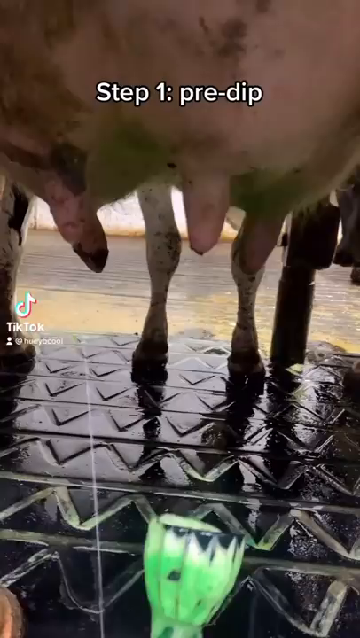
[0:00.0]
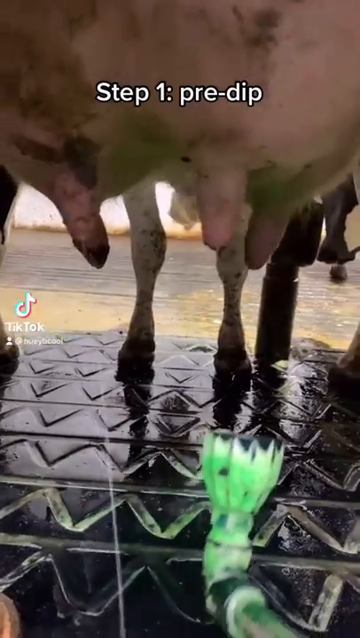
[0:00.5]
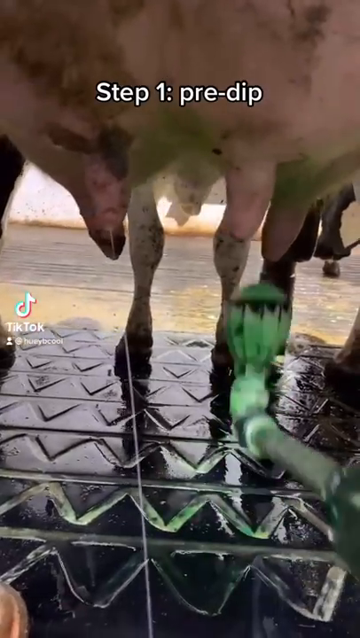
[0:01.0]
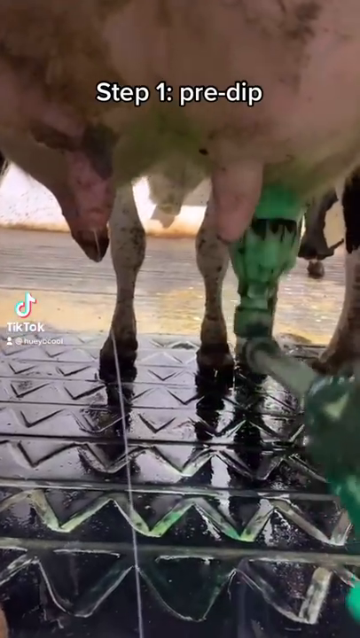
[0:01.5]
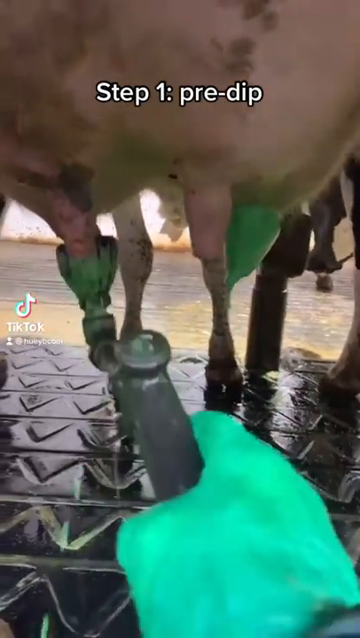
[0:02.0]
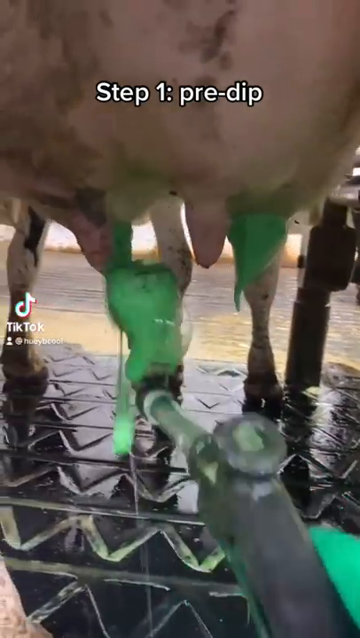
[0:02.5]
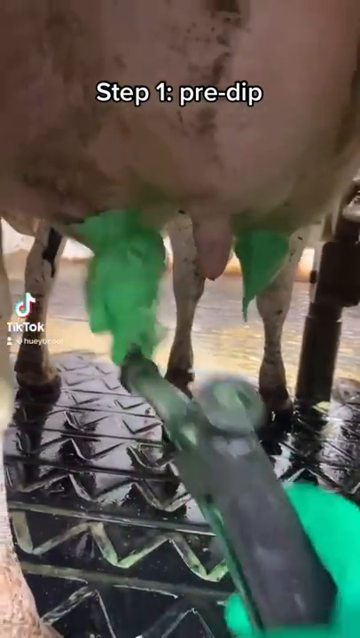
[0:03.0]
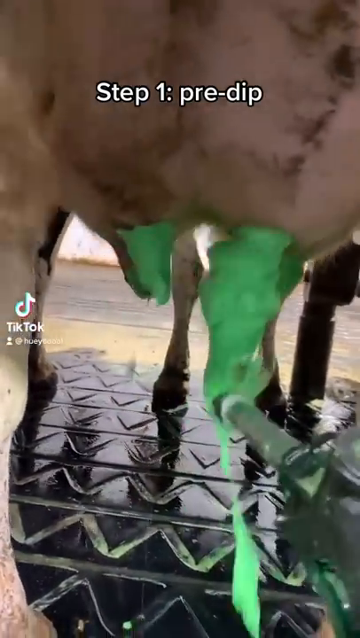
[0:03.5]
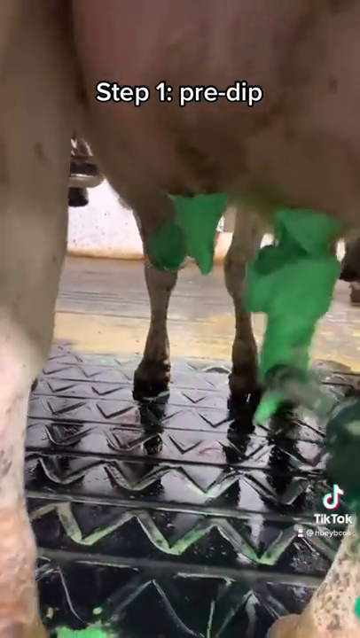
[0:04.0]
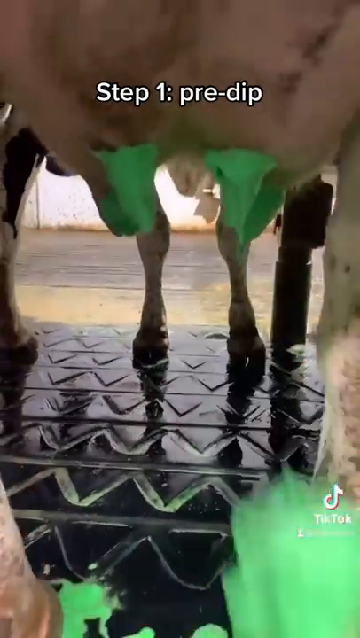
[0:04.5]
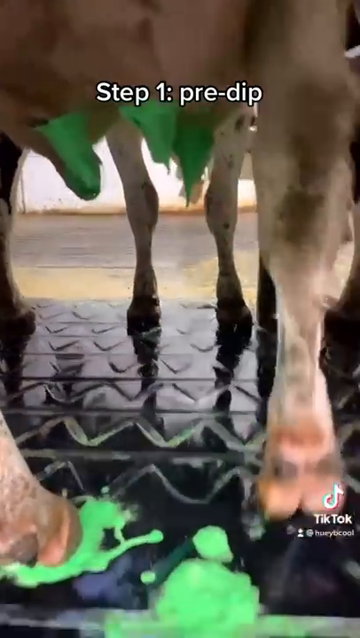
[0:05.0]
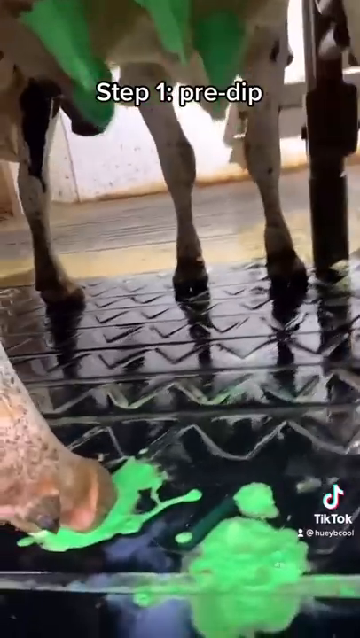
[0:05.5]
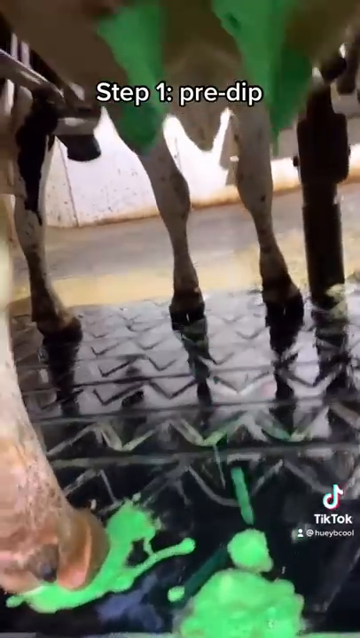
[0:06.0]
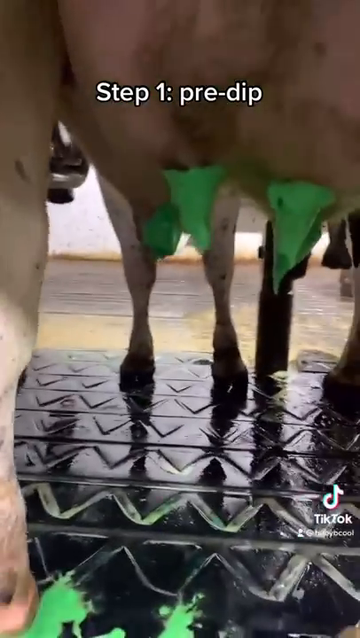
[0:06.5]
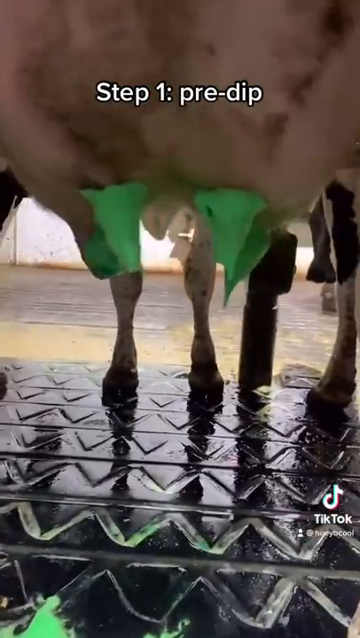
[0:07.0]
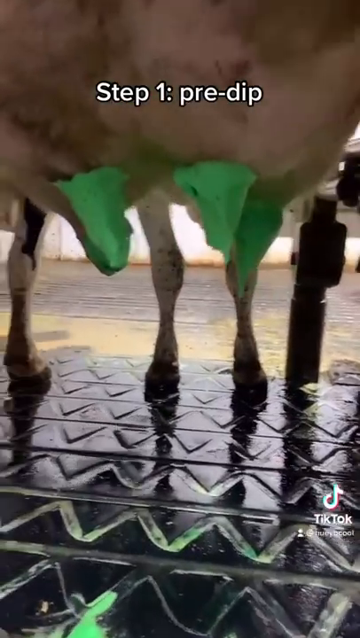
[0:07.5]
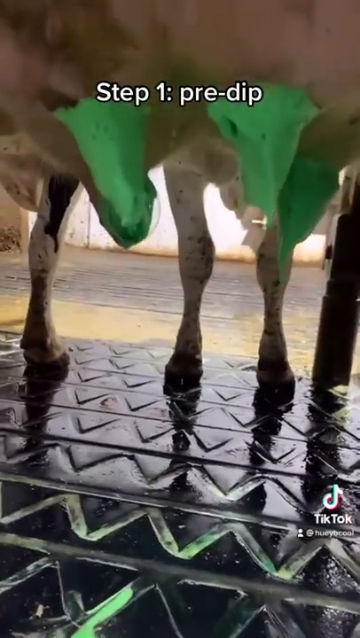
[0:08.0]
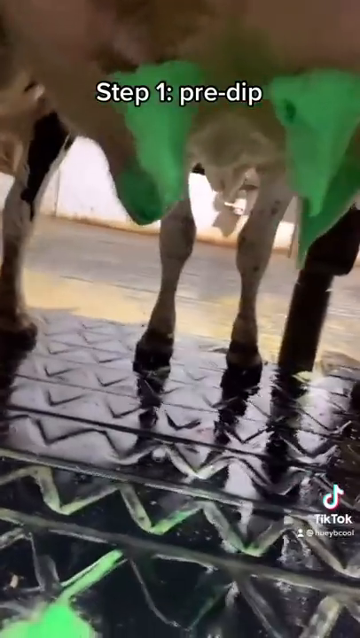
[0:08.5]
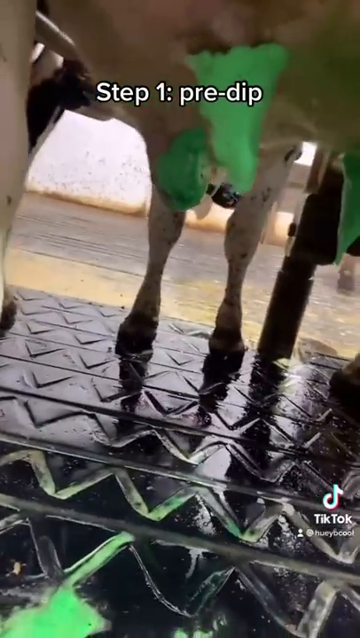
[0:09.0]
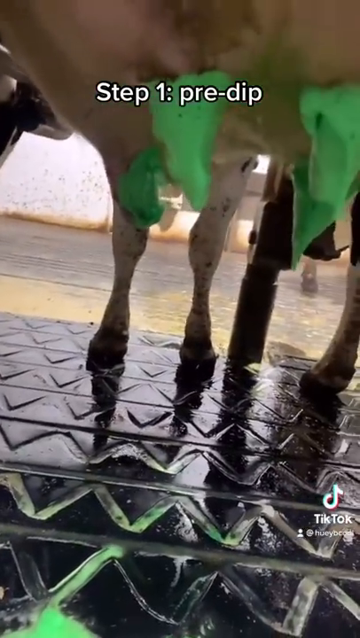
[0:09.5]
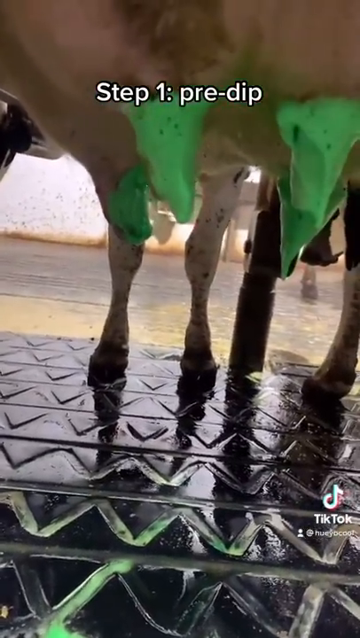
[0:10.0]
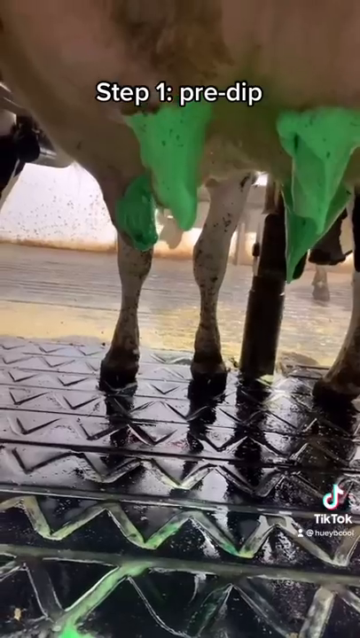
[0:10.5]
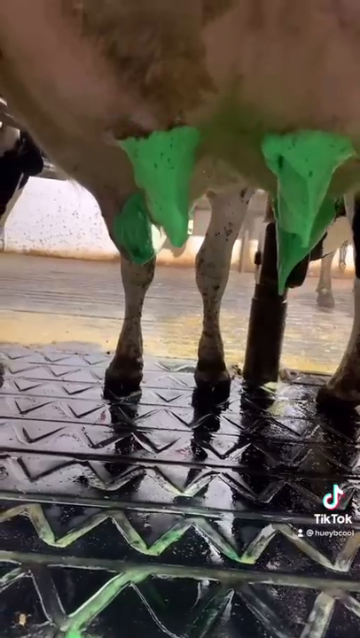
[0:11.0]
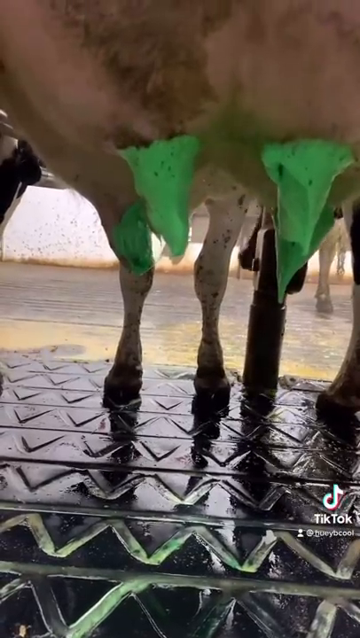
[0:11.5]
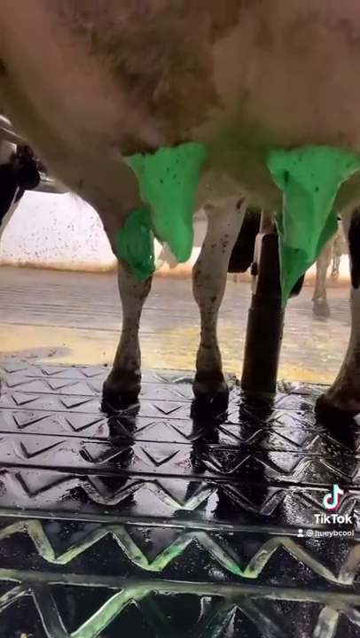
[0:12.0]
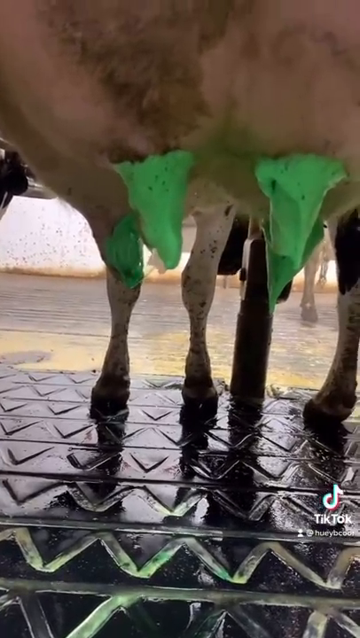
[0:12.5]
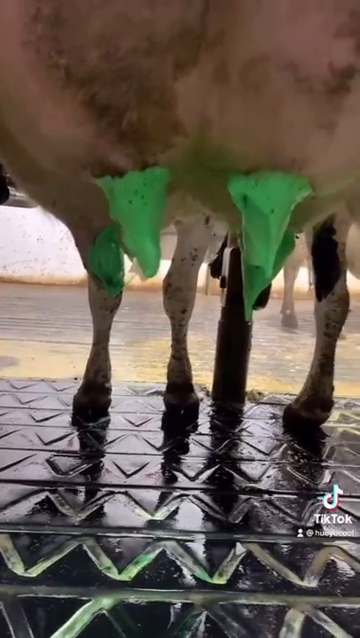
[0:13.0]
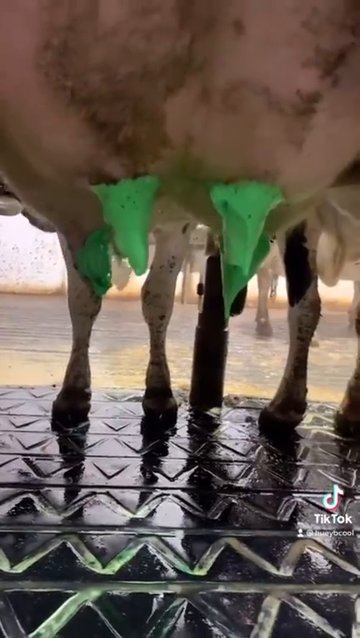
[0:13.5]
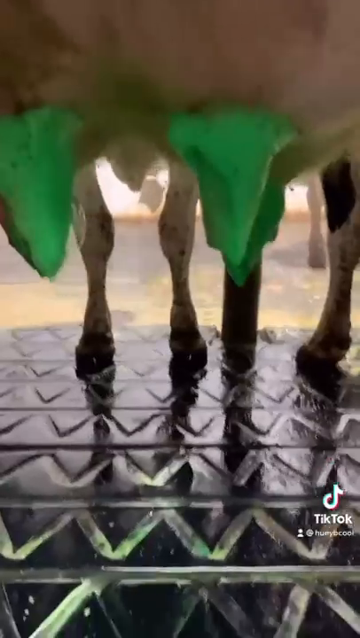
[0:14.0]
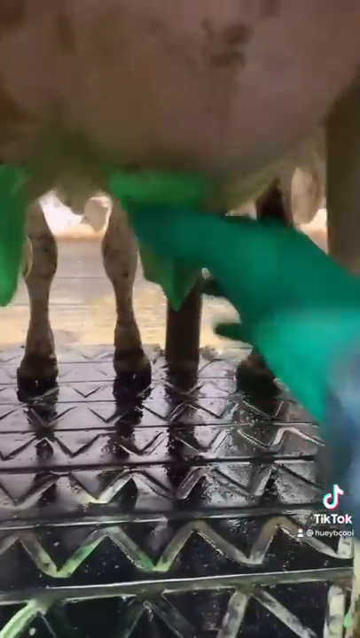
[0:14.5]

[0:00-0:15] Someone puts plastic clips, something like rubber, on the cow's milk buds. The person then grabs or presses on the cow's milk buds.